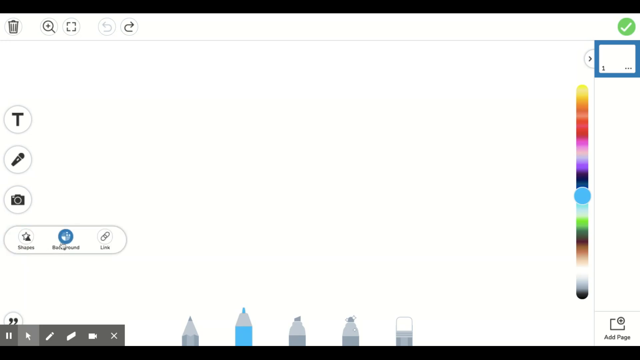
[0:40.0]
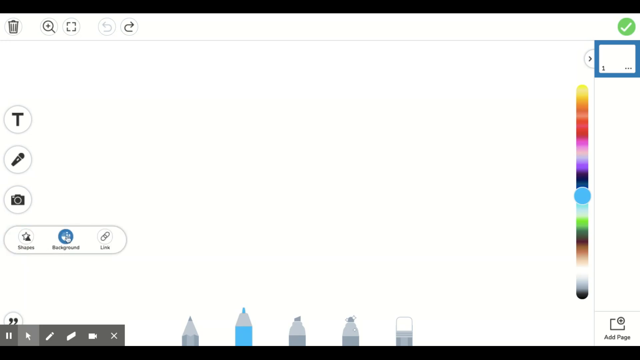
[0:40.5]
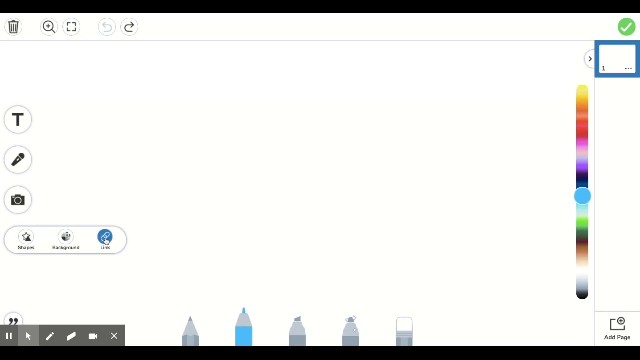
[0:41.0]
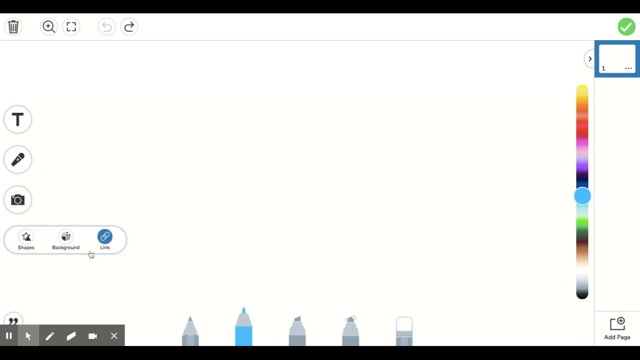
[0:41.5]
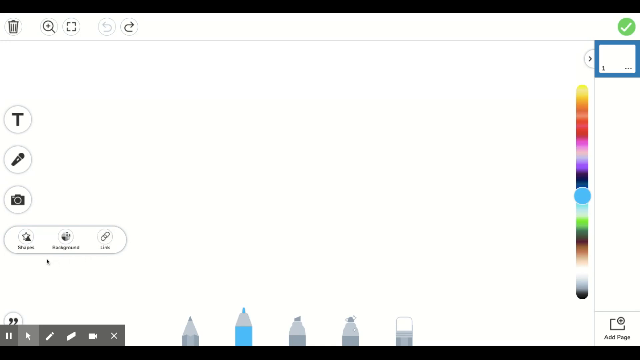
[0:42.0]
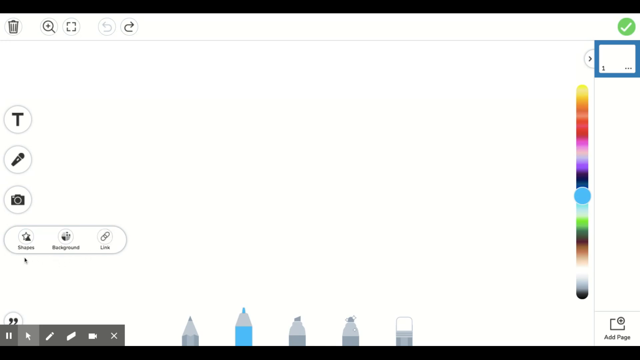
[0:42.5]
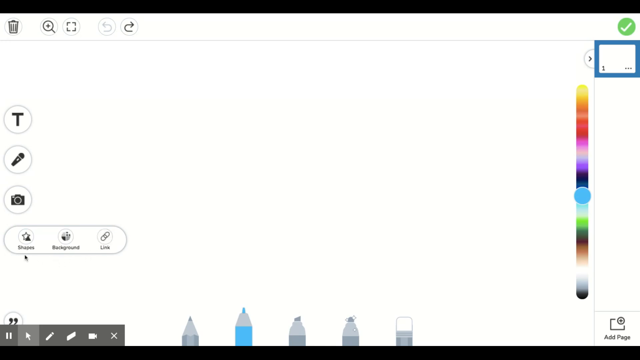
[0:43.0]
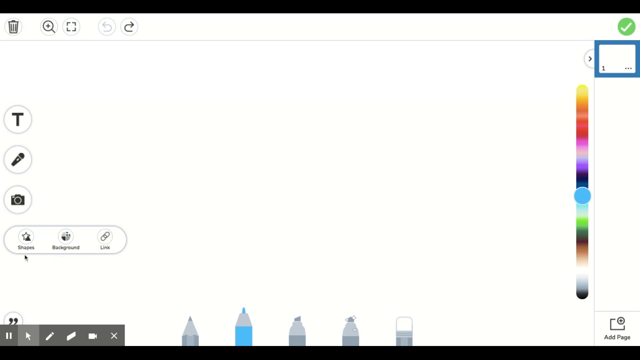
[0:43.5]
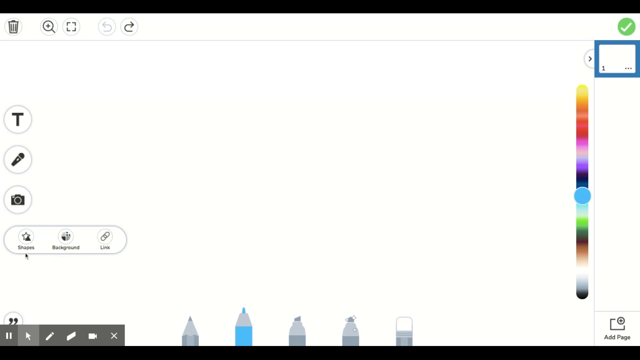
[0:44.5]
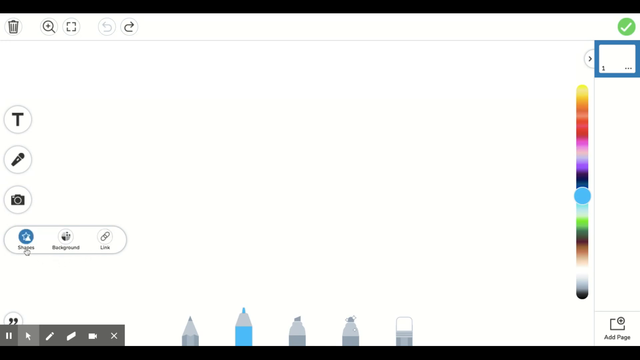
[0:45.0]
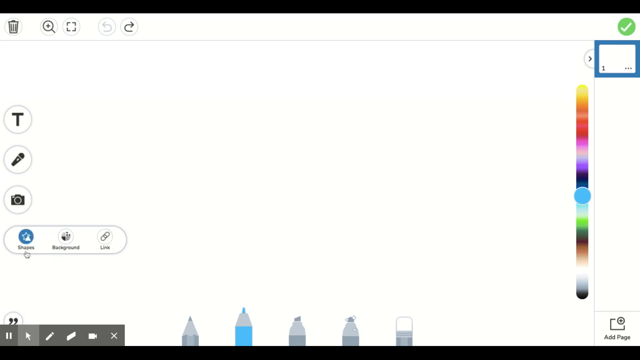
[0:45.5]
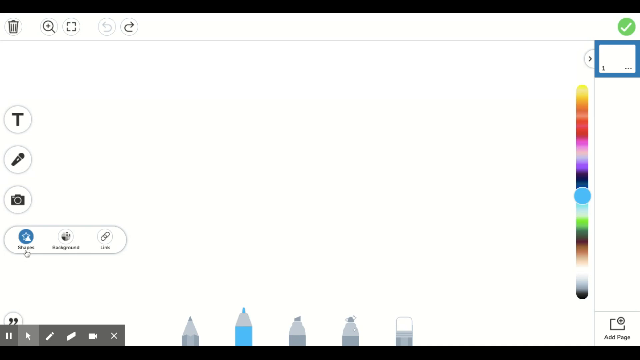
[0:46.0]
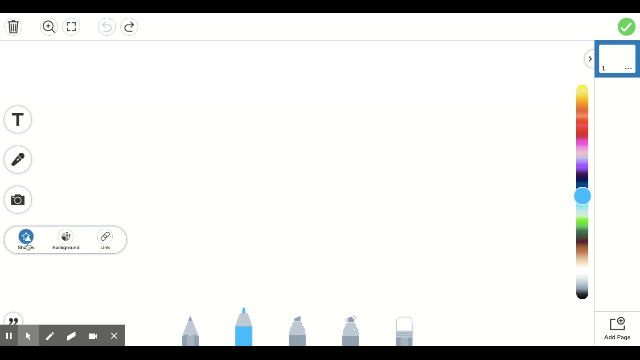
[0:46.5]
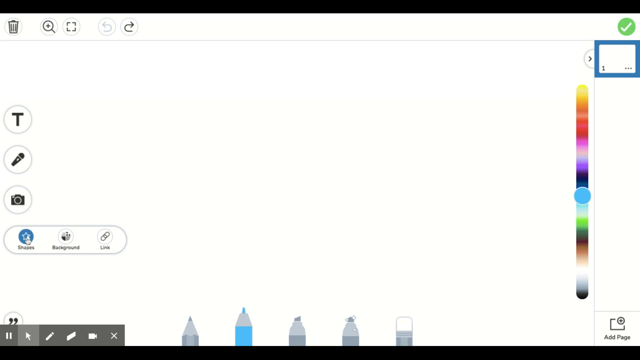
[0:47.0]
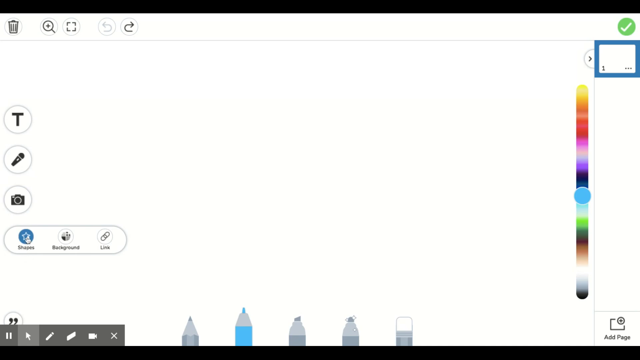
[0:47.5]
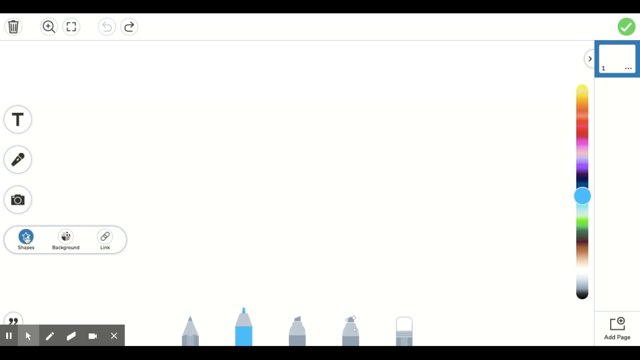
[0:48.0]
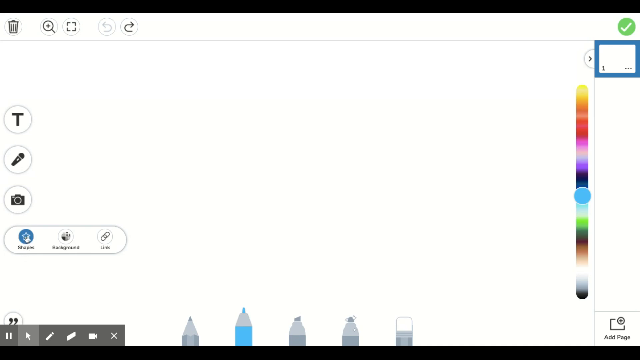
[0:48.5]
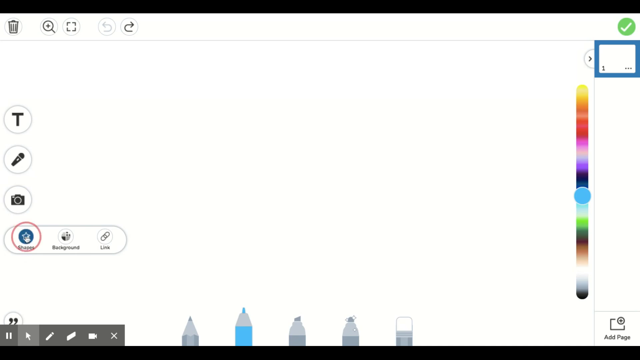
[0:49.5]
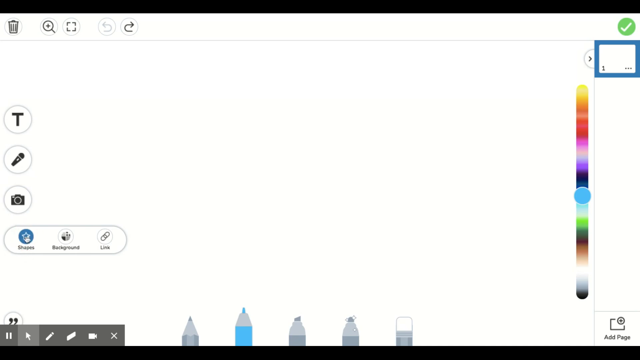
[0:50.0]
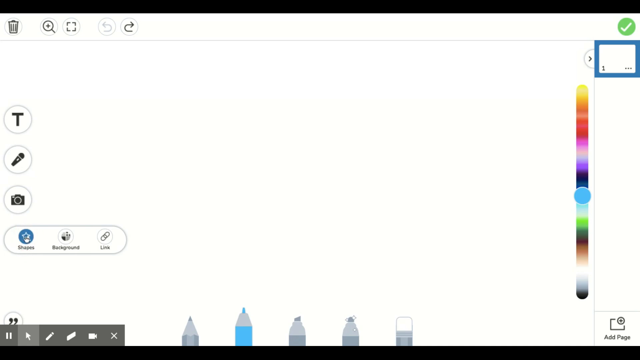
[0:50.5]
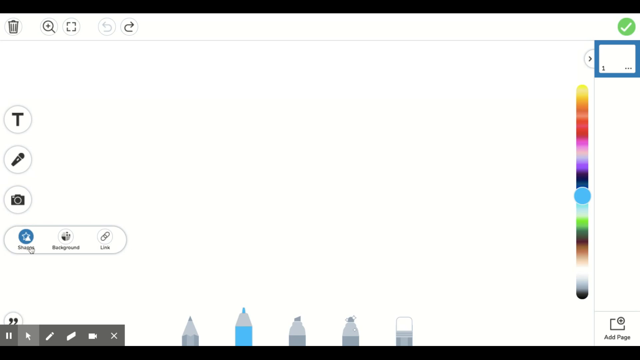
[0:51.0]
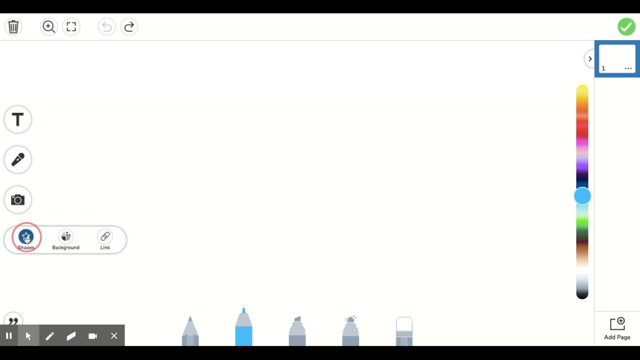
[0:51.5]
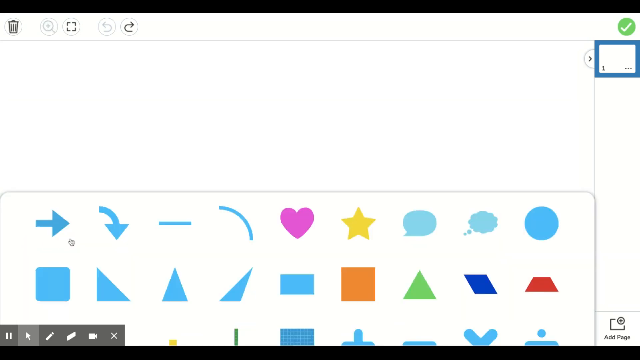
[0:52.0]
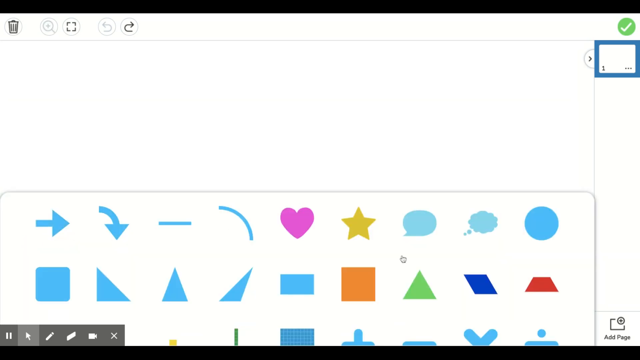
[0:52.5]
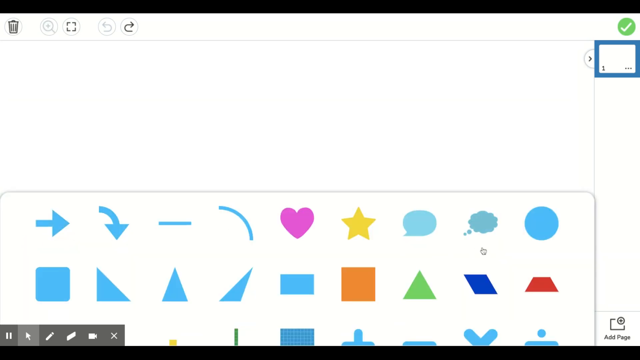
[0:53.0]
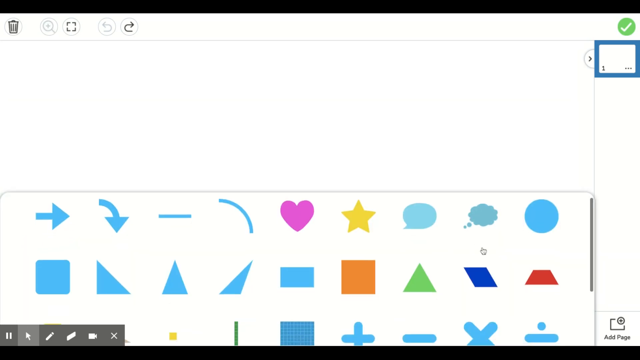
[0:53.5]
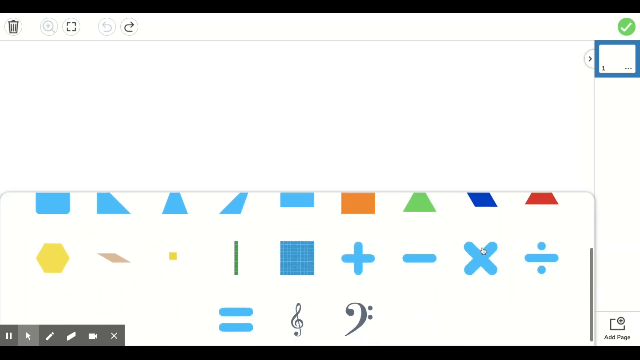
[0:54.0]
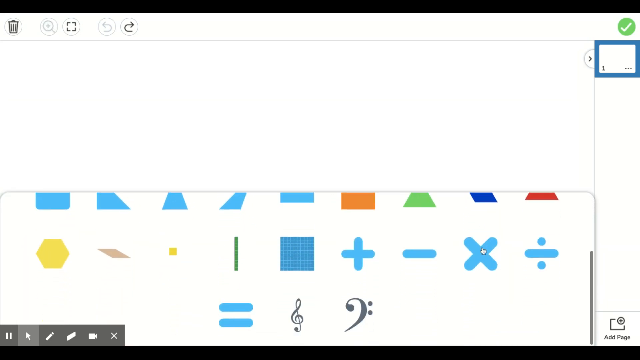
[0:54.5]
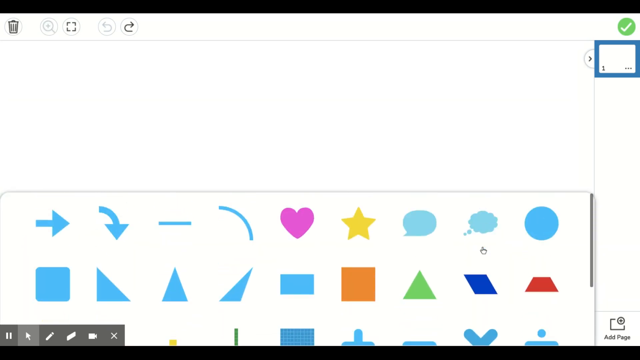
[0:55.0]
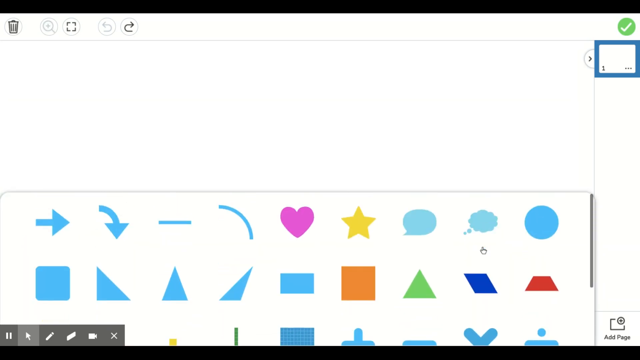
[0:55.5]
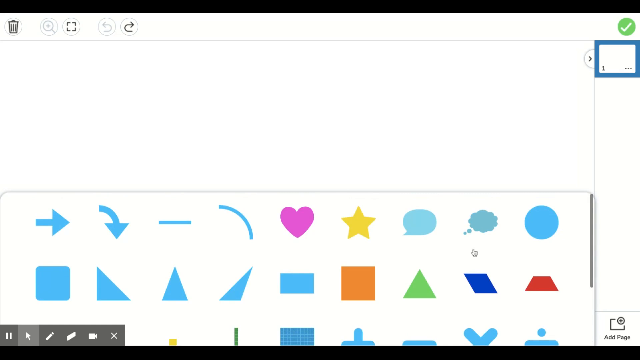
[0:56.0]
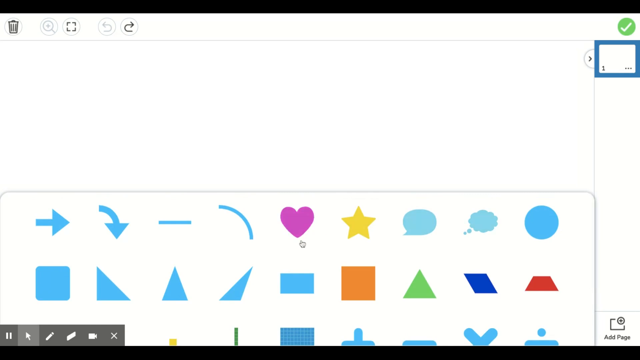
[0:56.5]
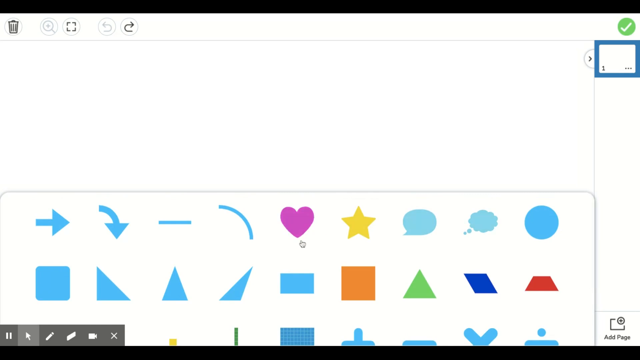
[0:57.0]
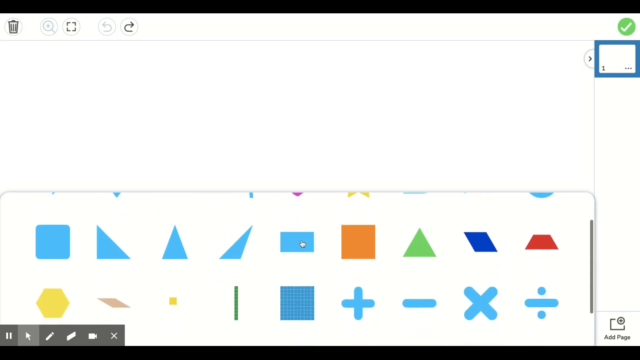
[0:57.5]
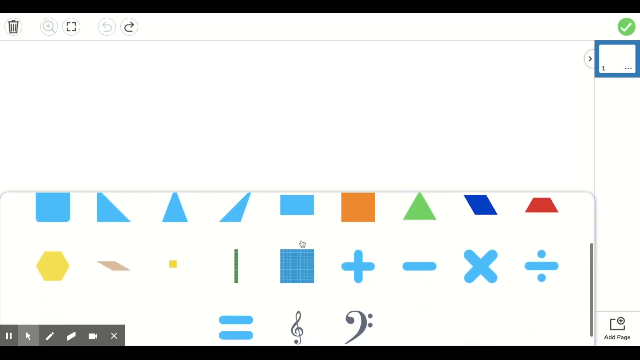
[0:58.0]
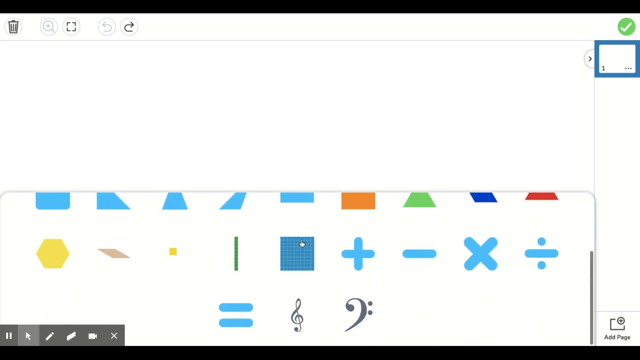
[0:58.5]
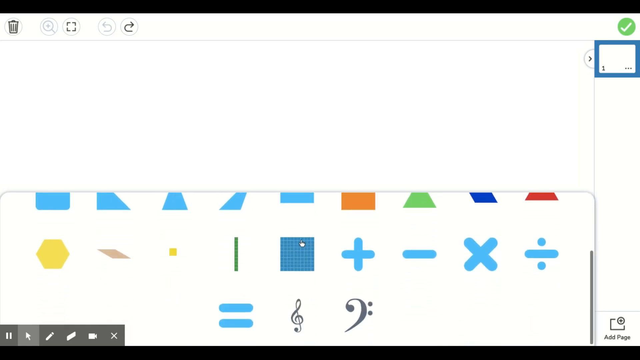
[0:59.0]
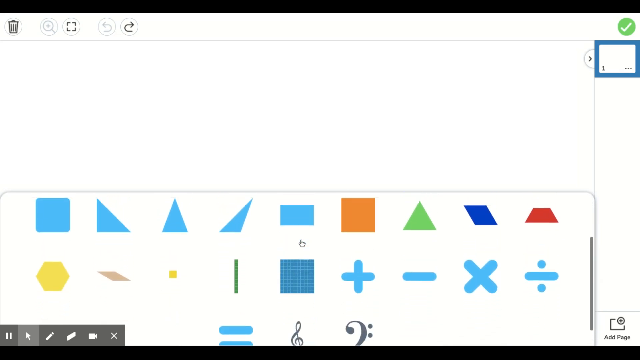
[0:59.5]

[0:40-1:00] A white drawing board or whiteboard has a color scale on the right, an "Add page" button at the bottom right, a number of drawing utensils along the bottom, and other options on the left. The user's cursor is over a button on the left, which has turned blue. The cursor then moves to highlight another button to the right of it called "link", which turns blue, before moving away from any buttons. The user returns to one of the first buttons and hovers over it while a red circle appears around the button. They click it and the page changes: the color bar has disappeared, and instead a large box takes up about half the screen with a number of shapes of various sizes and colors. The user scrolls down through all the different shapes, and then does so again more slowly.